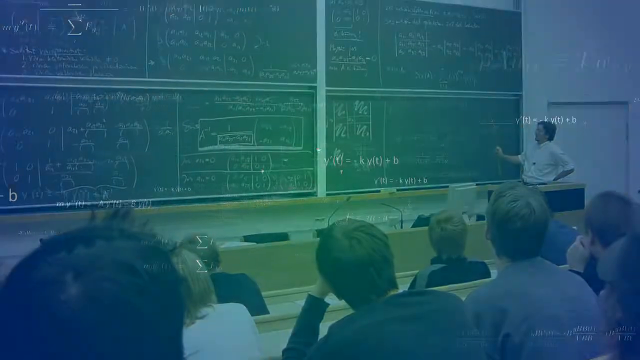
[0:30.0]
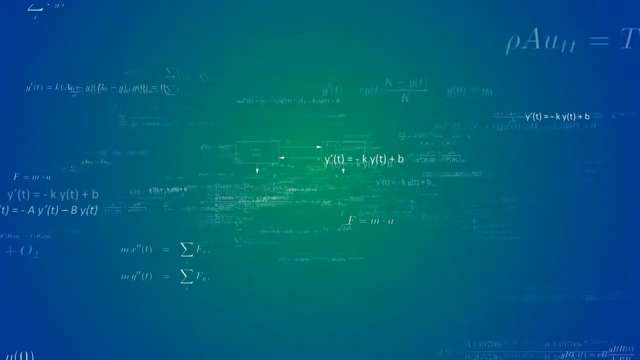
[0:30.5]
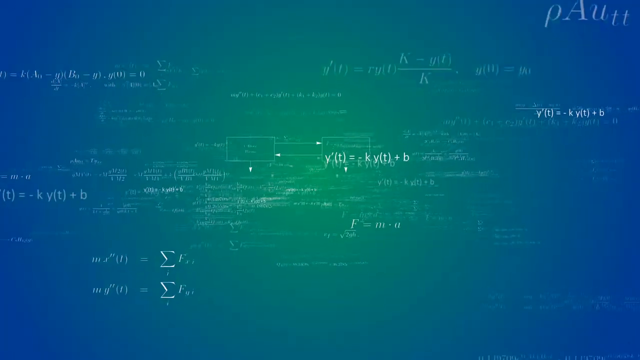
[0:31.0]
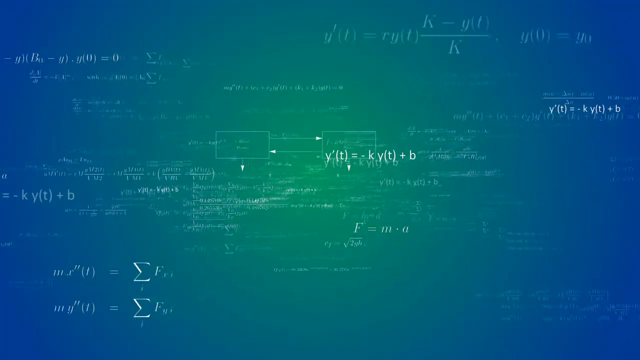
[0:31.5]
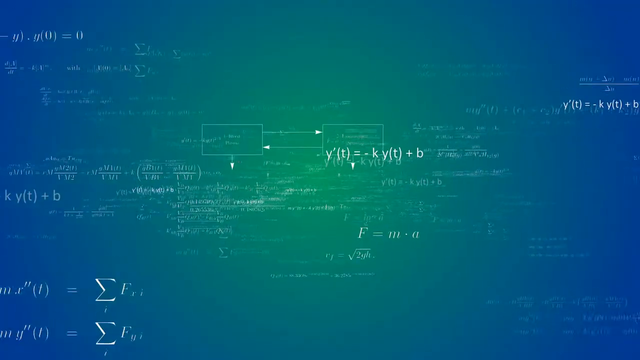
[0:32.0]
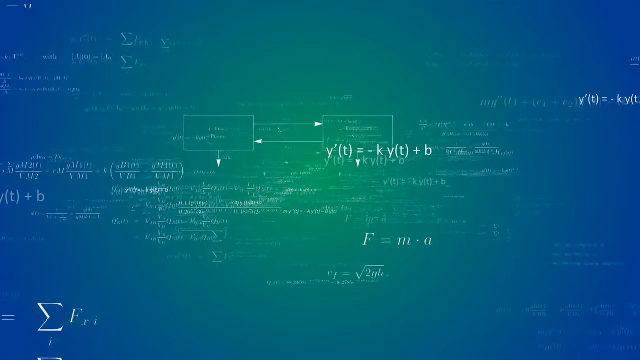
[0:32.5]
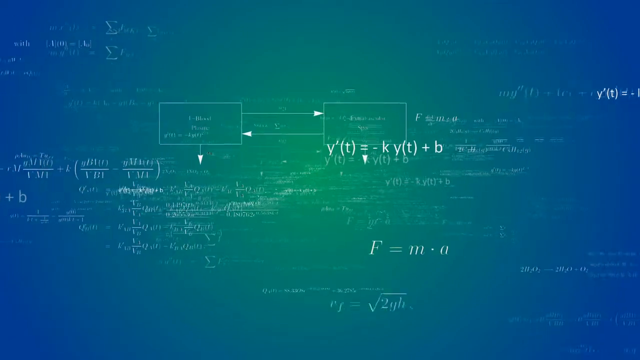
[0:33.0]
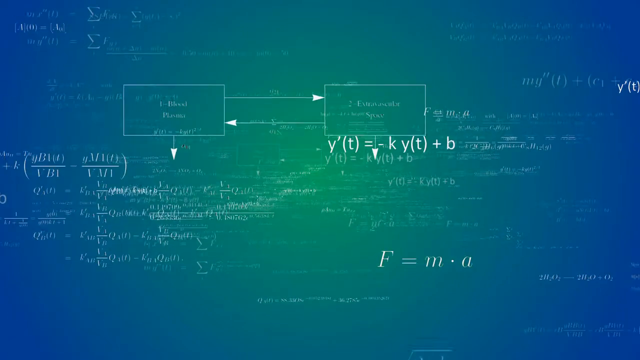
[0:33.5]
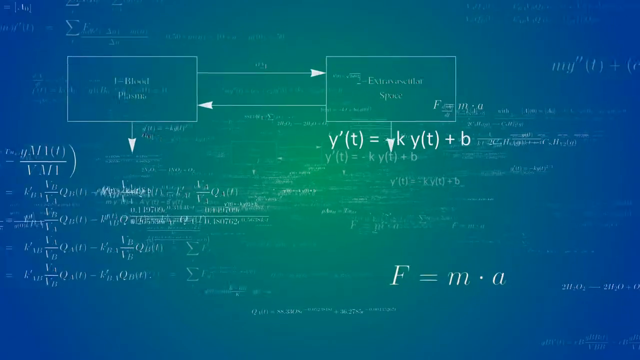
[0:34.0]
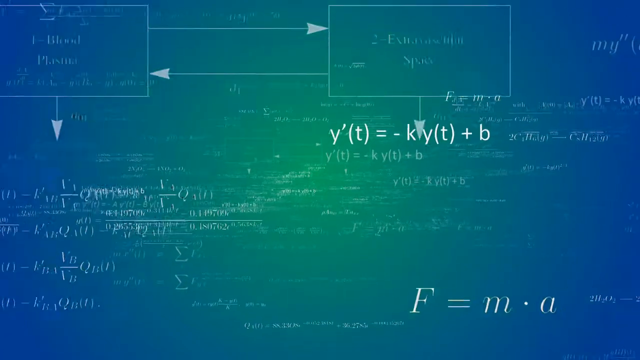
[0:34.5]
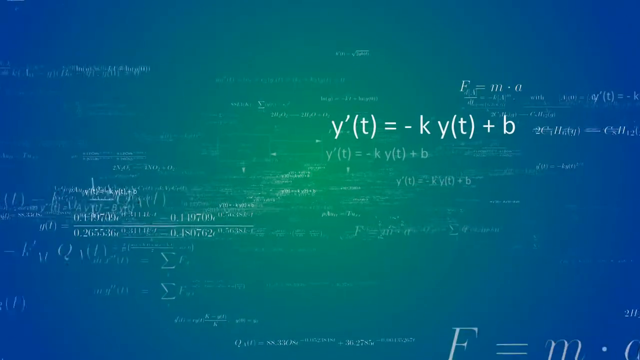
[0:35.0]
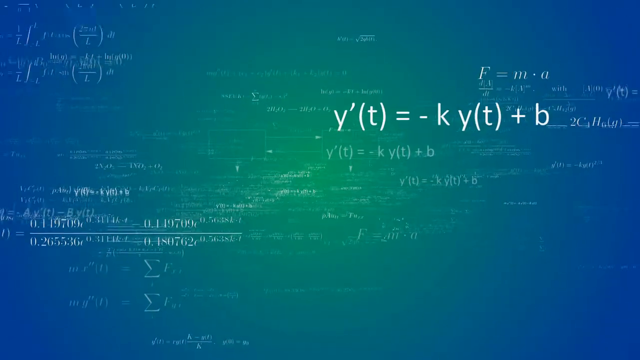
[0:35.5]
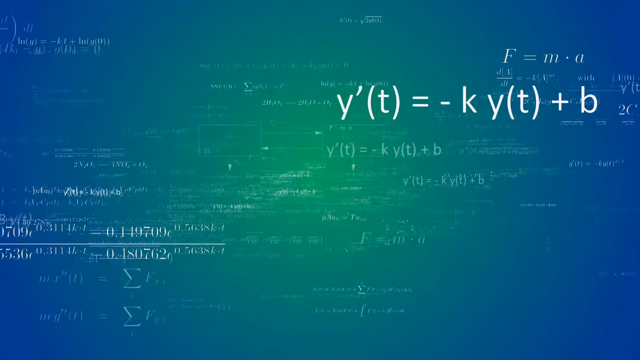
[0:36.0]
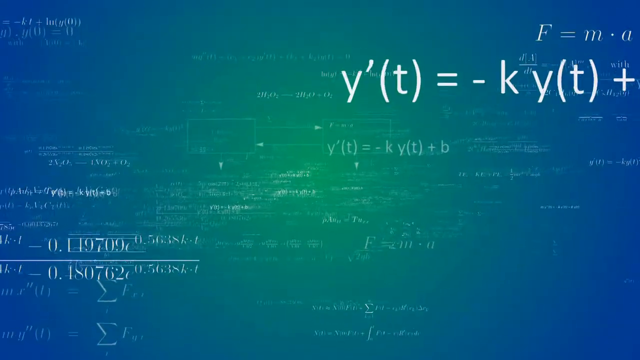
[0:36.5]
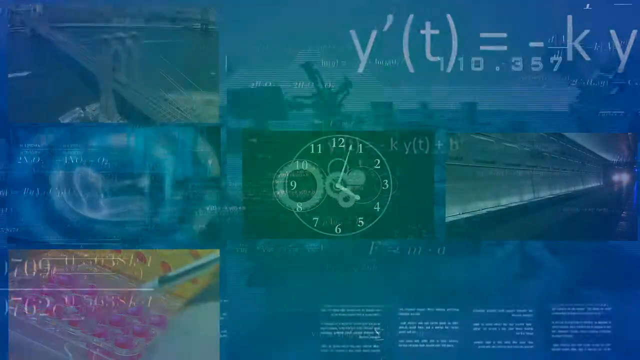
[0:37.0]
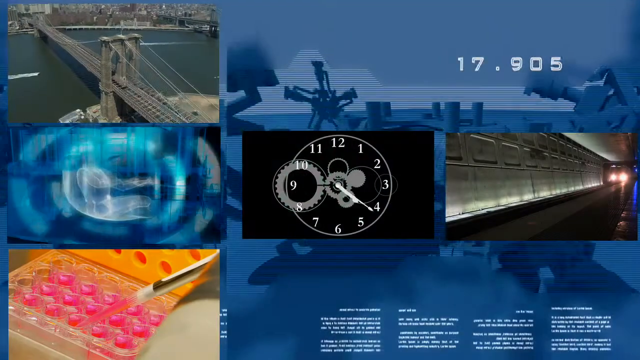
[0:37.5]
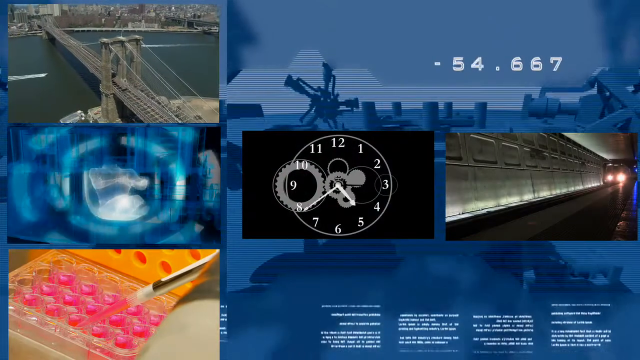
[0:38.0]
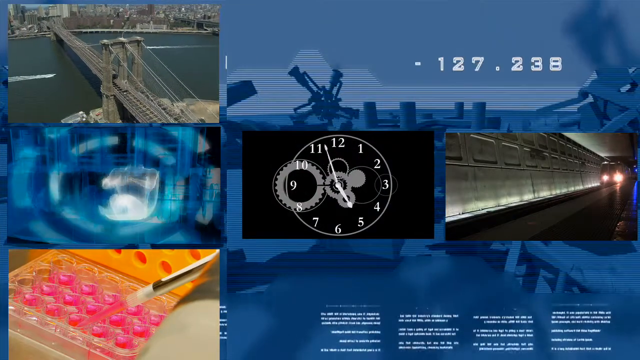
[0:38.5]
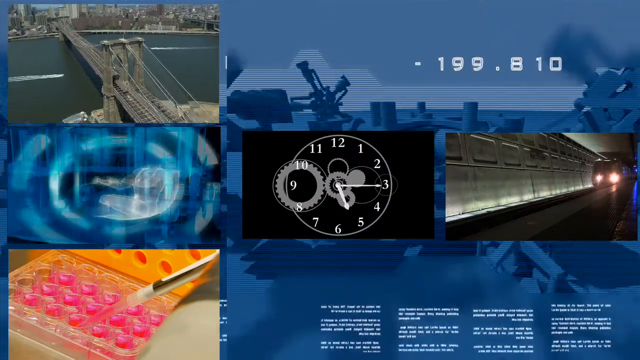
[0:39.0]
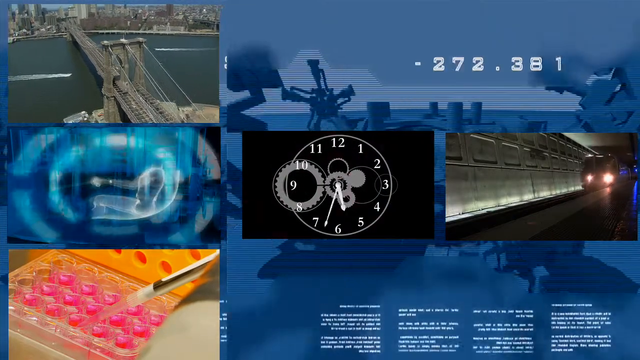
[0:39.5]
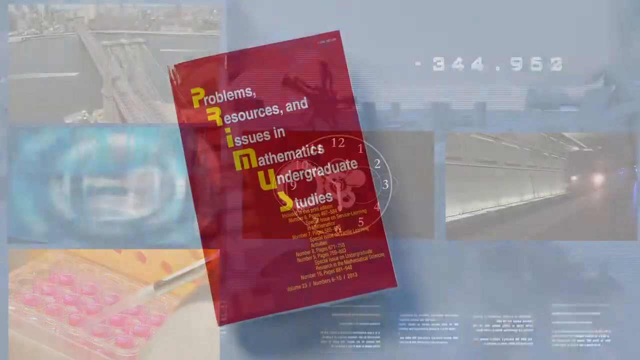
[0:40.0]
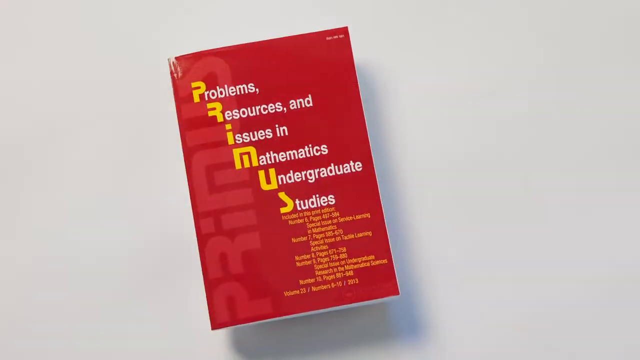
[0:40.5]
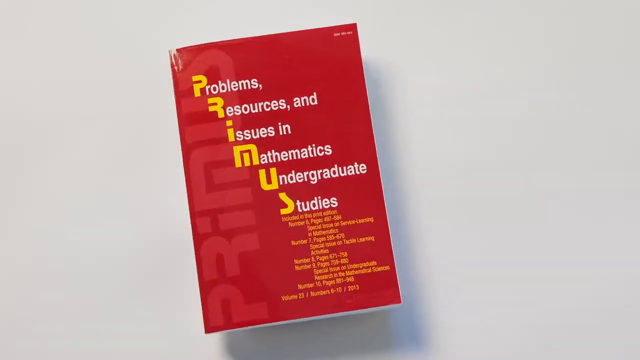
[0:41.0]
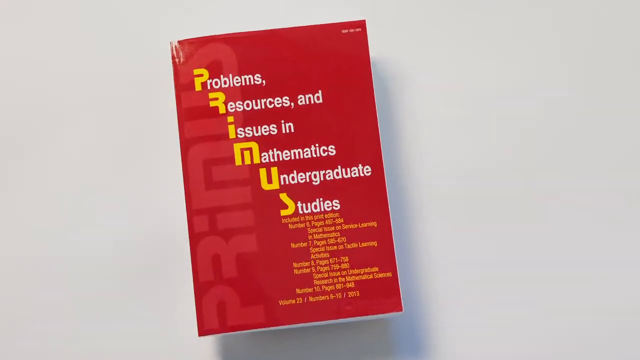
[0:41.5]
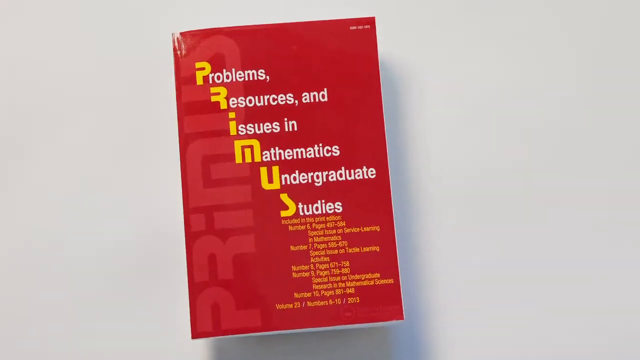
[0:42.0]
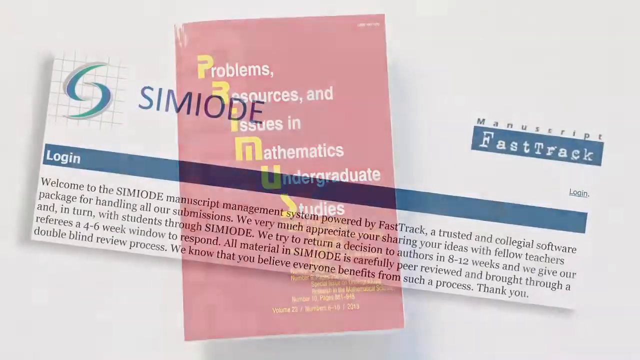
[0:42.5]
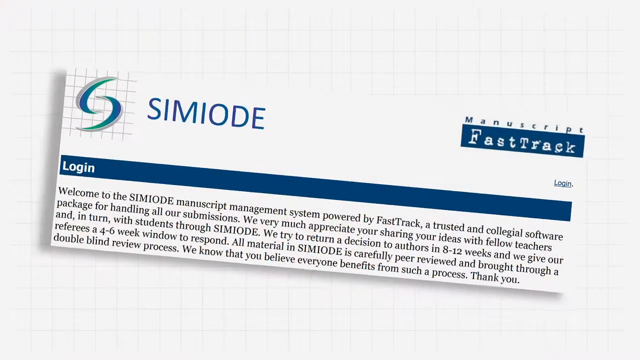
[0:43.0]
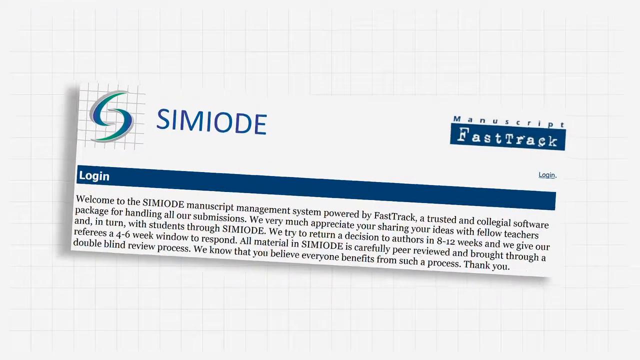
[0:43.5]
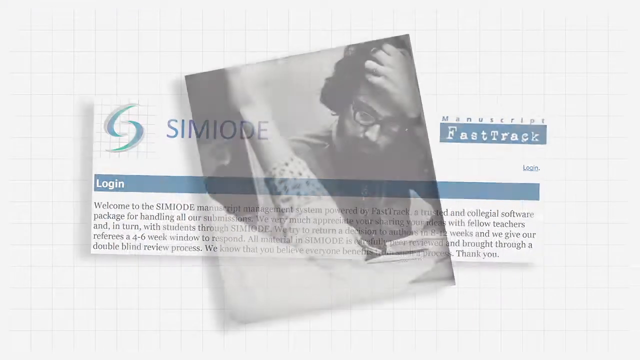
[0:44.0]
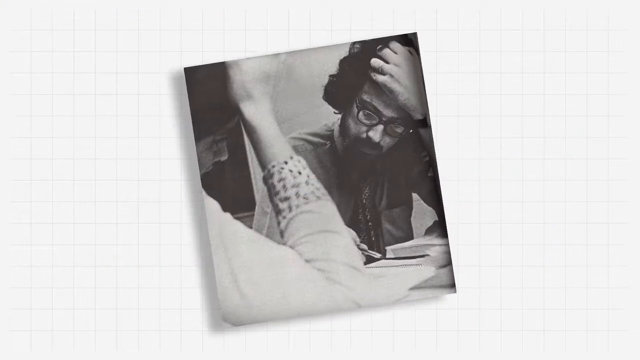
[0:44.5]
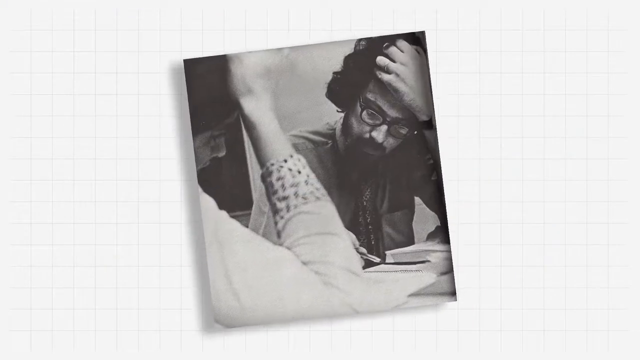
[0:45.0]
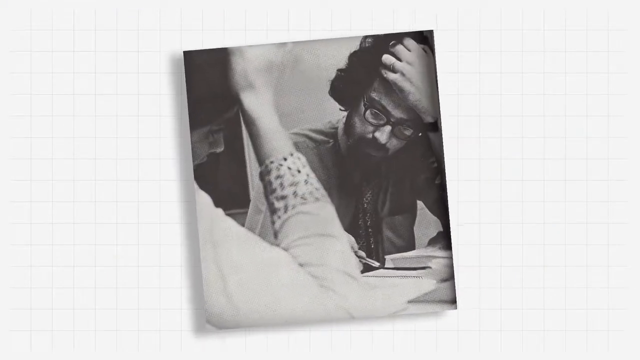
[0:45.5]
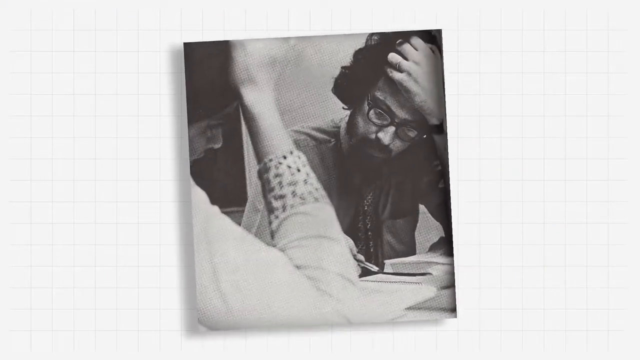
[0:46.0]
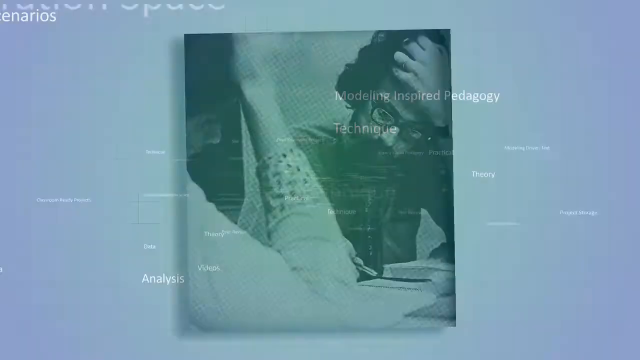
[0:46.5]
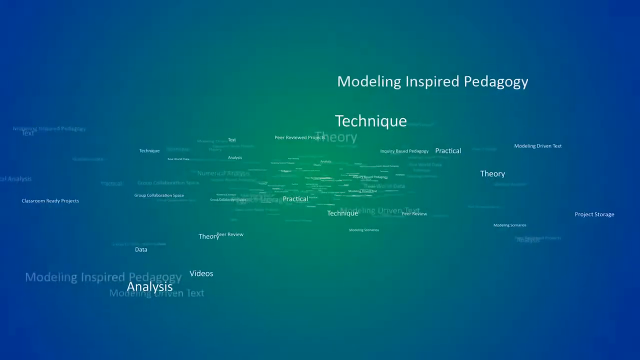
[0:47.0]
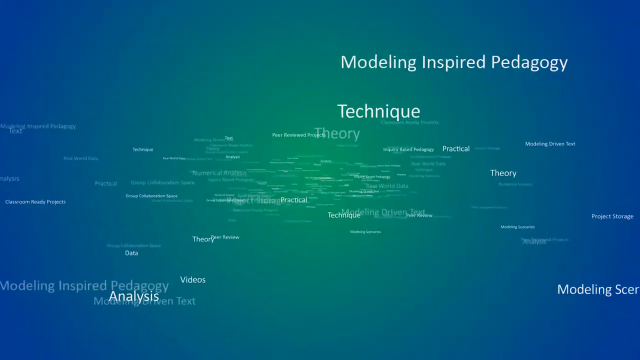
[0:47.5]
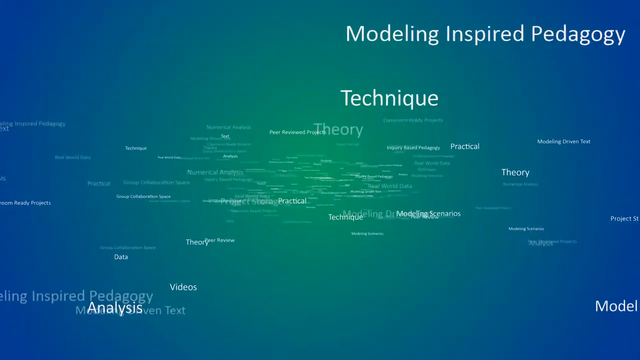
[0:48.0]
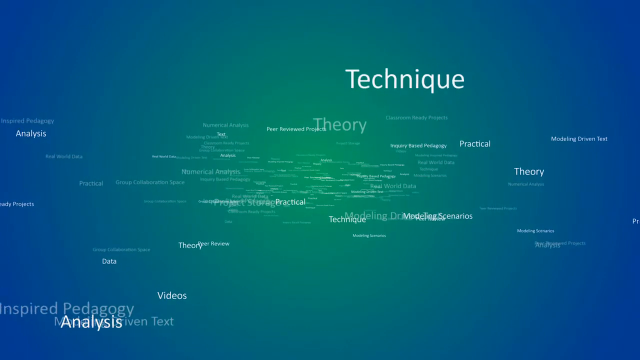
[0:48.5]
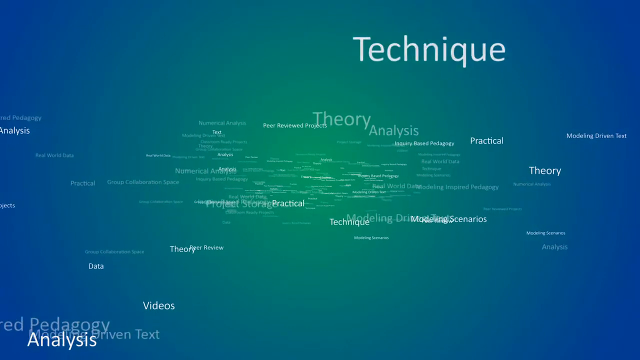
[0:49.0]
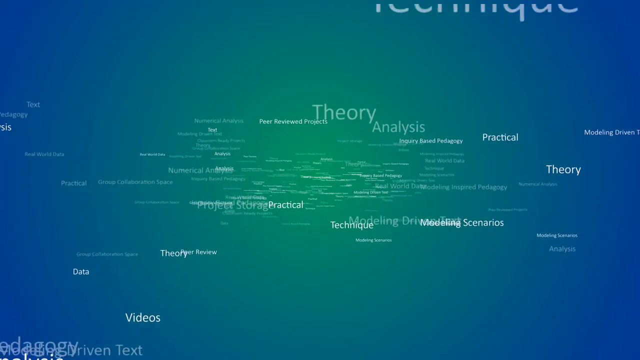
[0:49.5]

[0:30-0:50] A blue background appears with a blurred green center, gradually showing some green toward the center of the screen. A mass of equations is scattered all over the screen, thicker in the center than at the edges; most are too blurred to read. They emerge from the depths of the screen and move toward the camera. Next comes a separate page. On the left third of the screen are three separate images. The top one is a square showing a suspension bridge, the river it crosses and the city on the far side. The second is a blue-gray, lighter blue and white graphic, maybe some artwork: the light blue forms a couple of circles coming from the outside, and some darker blue lines run horizontally across or vertically down in what appears quite random. At the bottom is a color palette with an orange lid and a base holding colors that all seem to be pink, with a paintbrush being dabbed into one of them. On the right two-thirds of the screen is another graphic. On its left side, in line with the blue-gray and white graphic, so kind of in the middle, is a clock or watch face; to its right is the inside of a tunnel with some sort of locomotive approaching, its lights and front visible in the distance, along with the tunnel wall and roof. The watch face has numbers; the hour hand points to nearly five and the minute hand to just after seven. Cogs are visible as if showing the watch's inner mechanism, in particular a circular cog within a faint white circle. The image has a black background; the cog runs through the 10 and the 8, and the 9 is just off center of the cog.